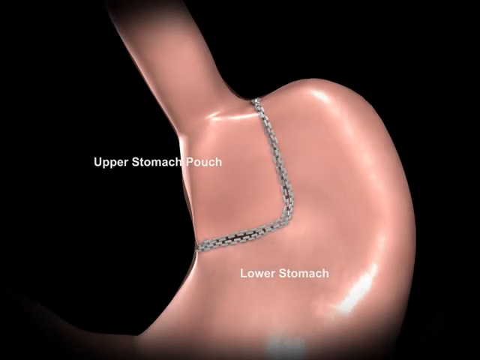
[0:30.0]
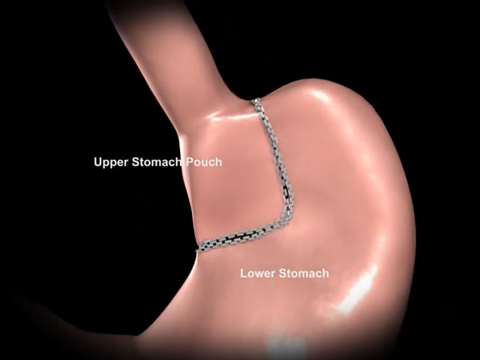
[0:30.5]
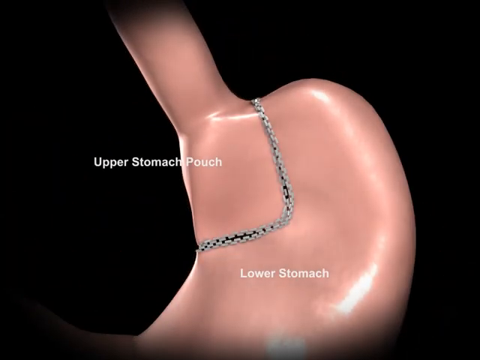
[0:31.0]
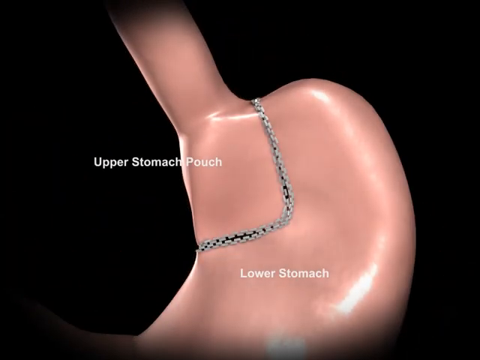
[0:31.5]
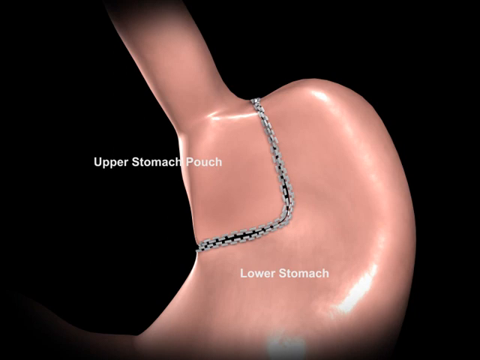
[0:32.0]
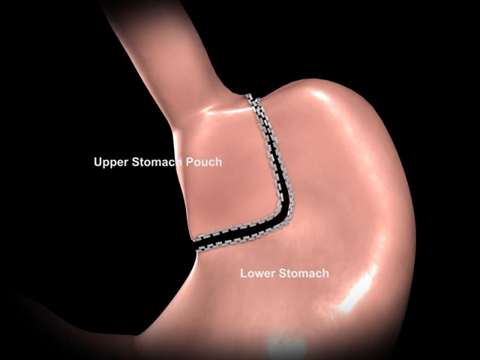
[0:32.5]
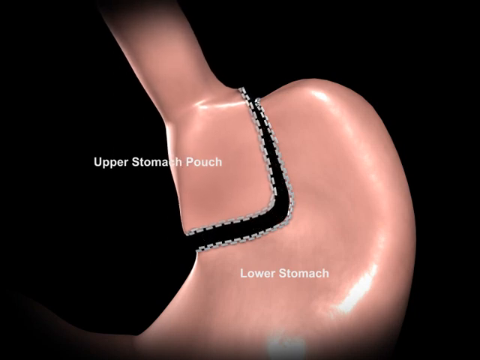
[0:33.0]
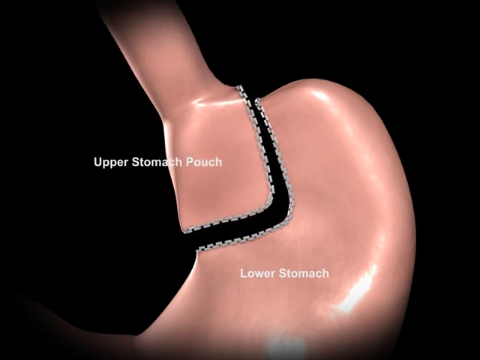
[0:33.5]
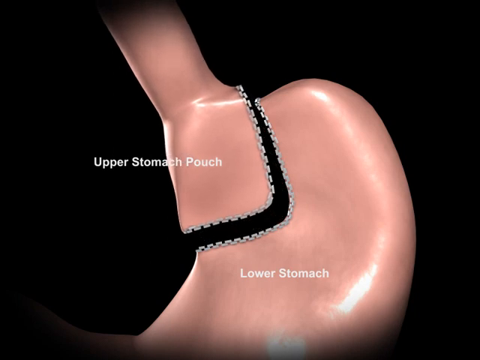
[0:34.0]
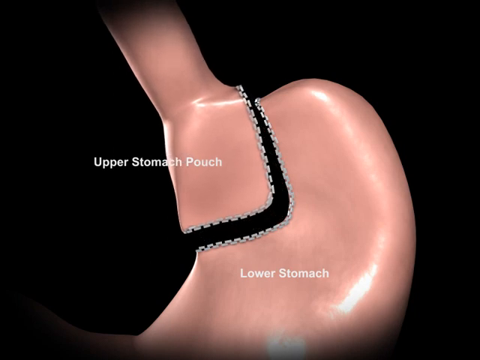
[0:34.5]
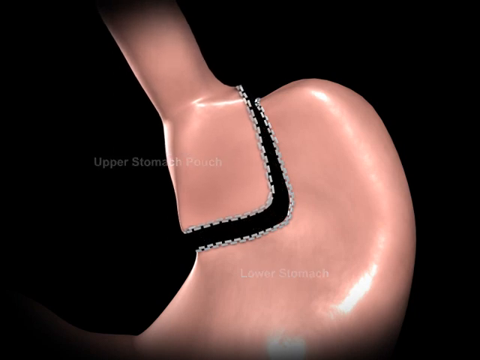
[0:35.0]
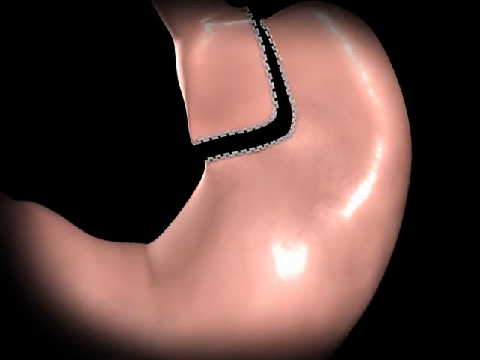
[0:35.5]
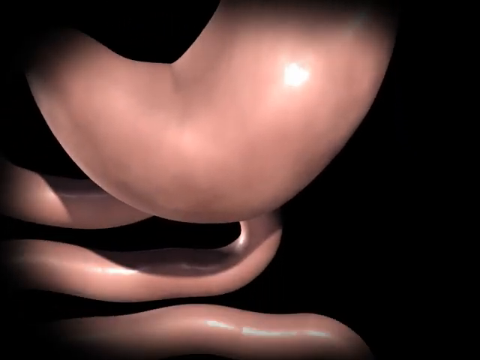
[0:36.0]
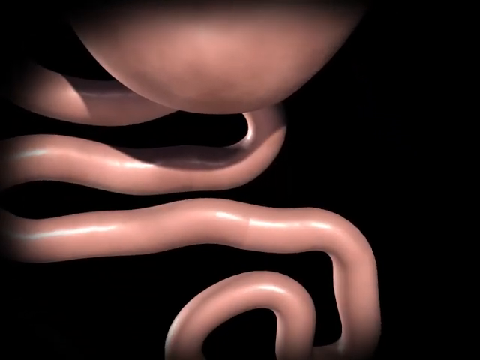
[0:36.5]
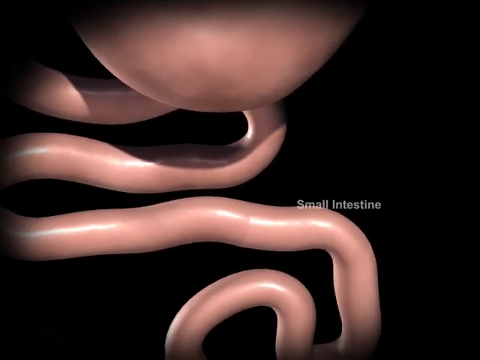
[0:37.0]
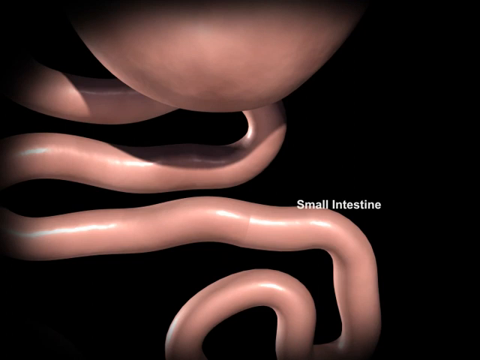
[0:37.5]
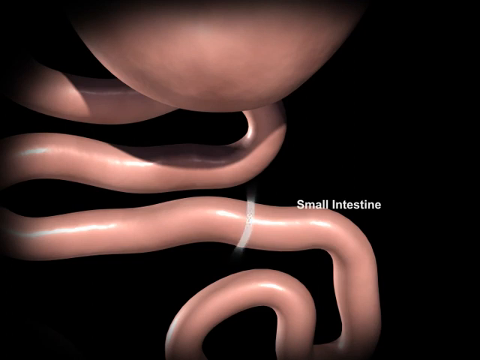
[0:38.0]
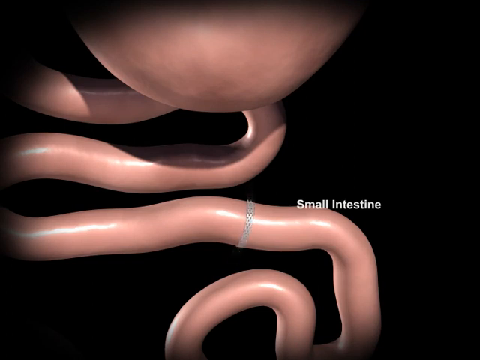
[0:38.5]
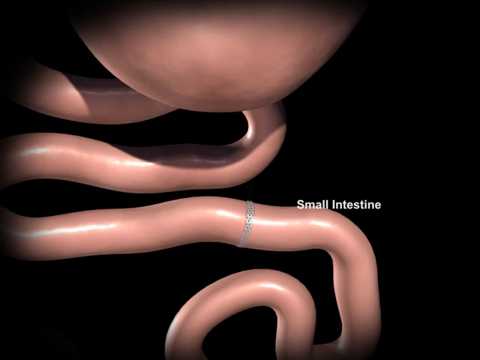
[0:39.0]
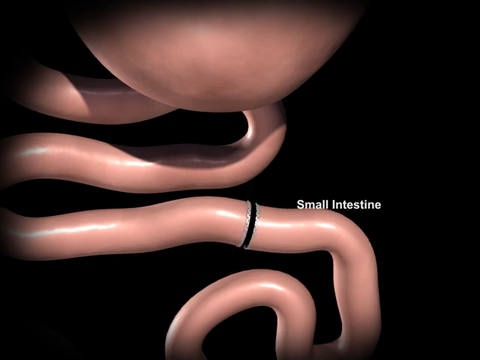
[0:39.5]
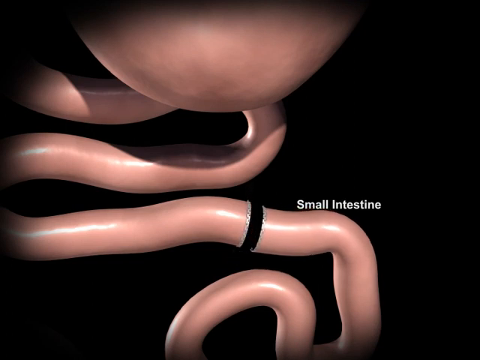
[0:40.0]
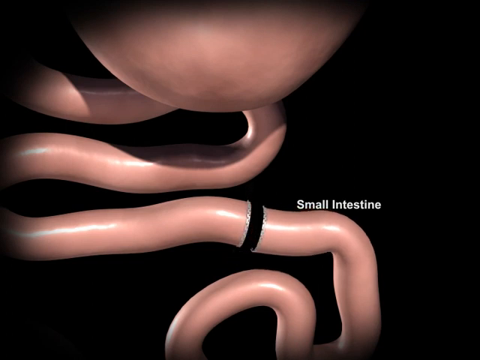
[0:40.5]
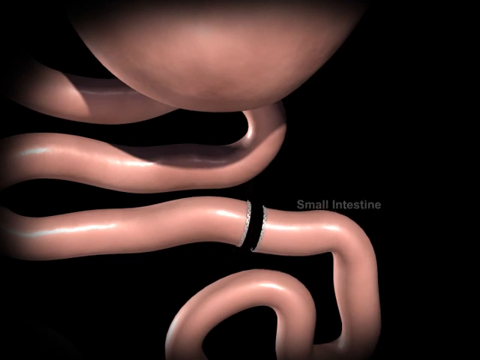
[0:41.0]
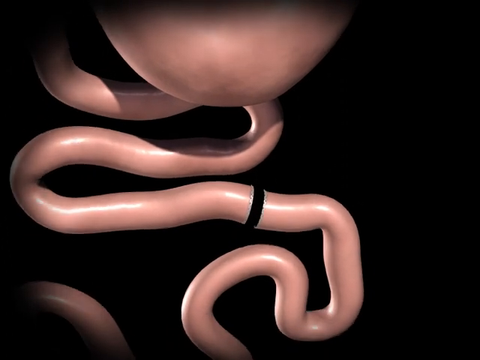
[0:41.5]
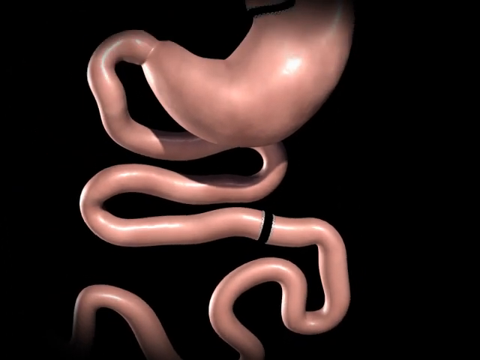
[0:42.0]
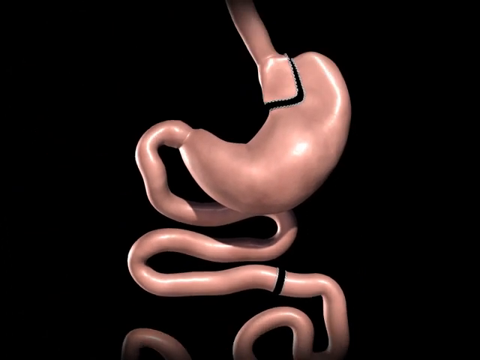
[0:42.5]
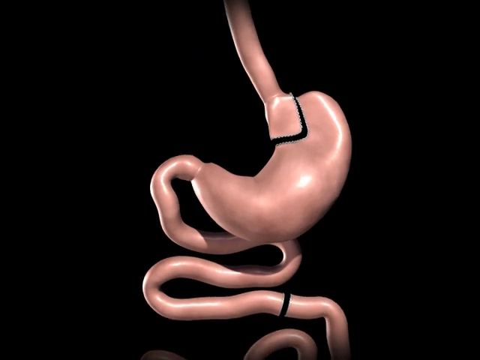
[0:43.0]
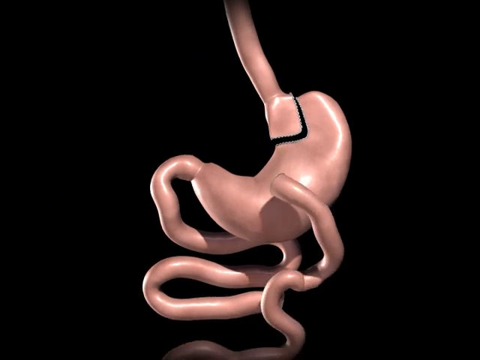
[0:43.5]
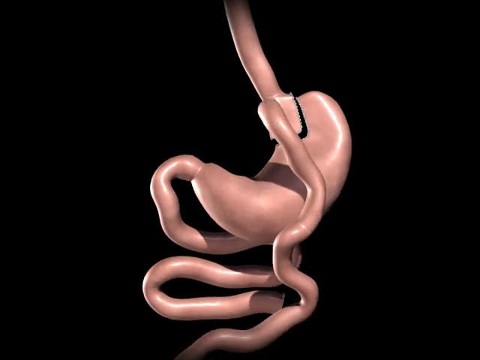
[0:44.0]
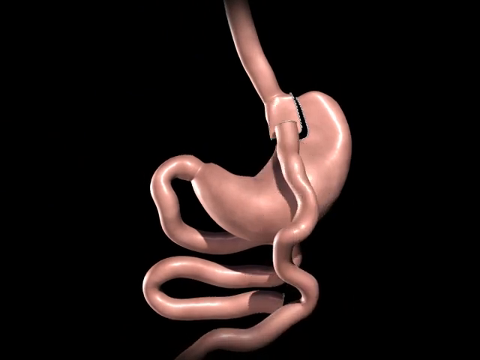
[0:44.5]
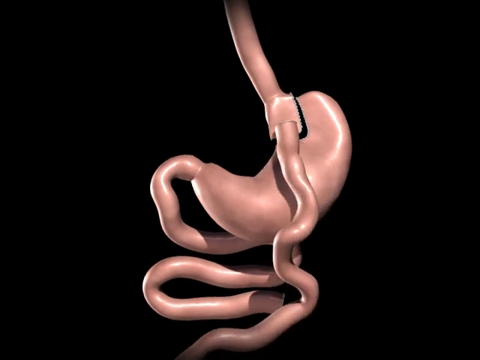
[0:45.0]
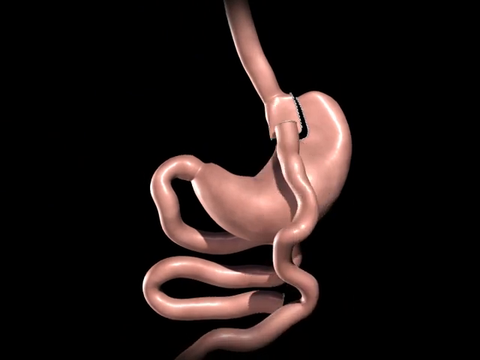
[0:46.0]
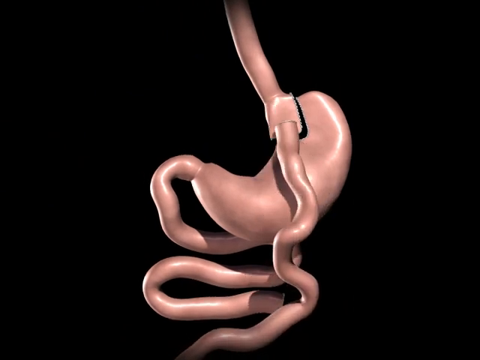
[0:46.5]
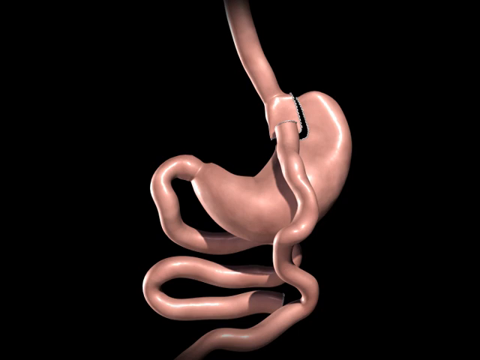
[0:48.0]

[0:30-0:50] The pink stomach and lower esophagus are shown in front of a black background. In the upper corner, almost splitting the stomach into quarters, is a silver zipper-like object. It starts just below the esophagus at the top center of the stomach, goes down to the center of the stomach, and then veers to the left in a square shape. This part is labeled "upper stomach pouch", and the area below it is labeled "lower stomach". The section below the esophagus that is separated by the zipper object is lifted up and toward the left. The image then moves to the lower stomach, where intestines swirl down, and the words "small intestines" appear. A silver zipper object is placed around one of the small intestines in a circular pattern, and the small intestines are then separated, with one portion moving away from the other toward the right. The image zooms up toward the separated area of the esophagus and stomach, and it is placed below the esophagus at the bottom of the separated stomach area.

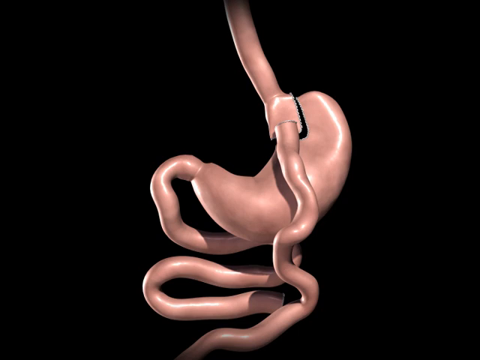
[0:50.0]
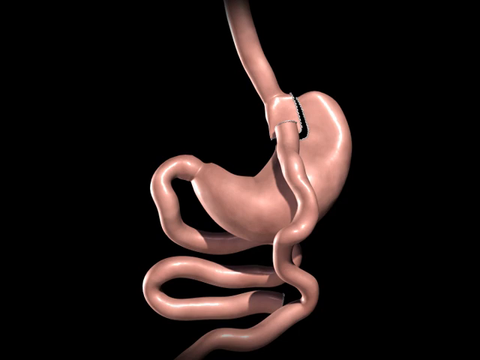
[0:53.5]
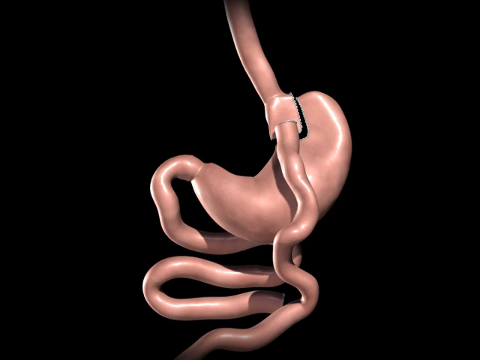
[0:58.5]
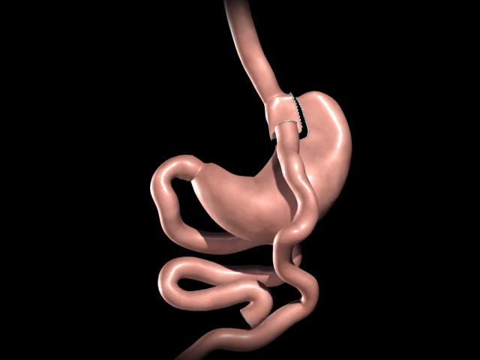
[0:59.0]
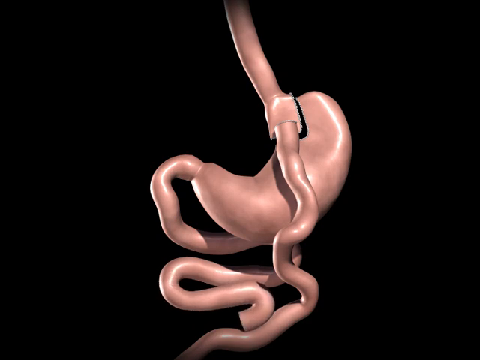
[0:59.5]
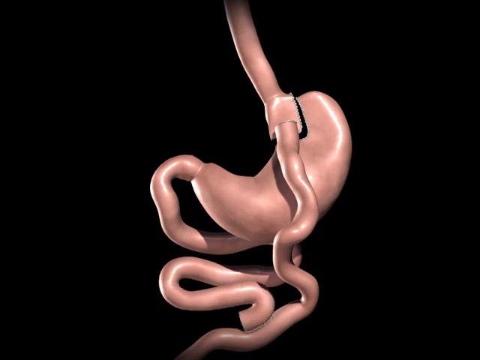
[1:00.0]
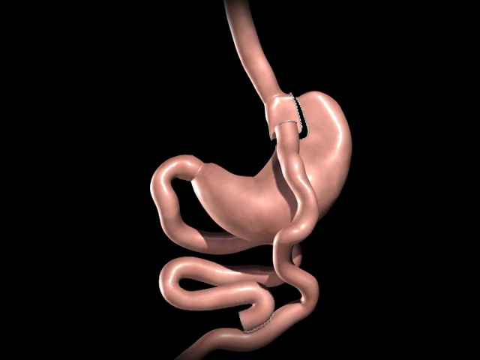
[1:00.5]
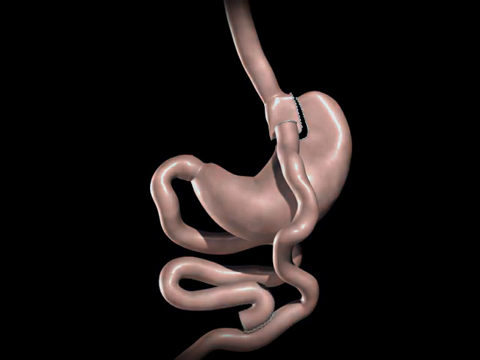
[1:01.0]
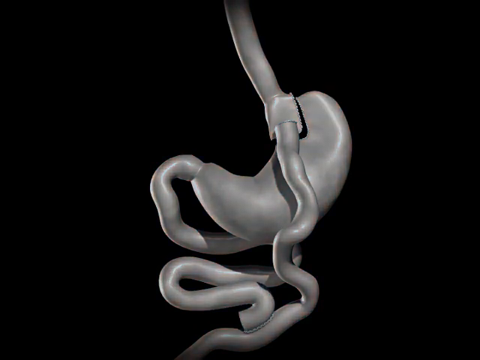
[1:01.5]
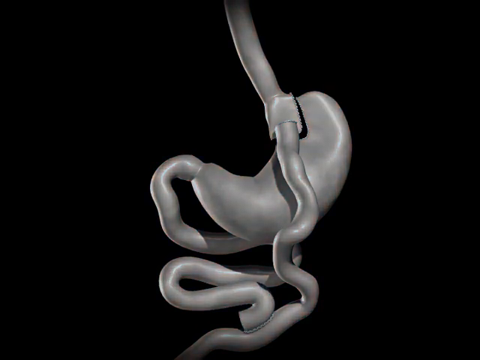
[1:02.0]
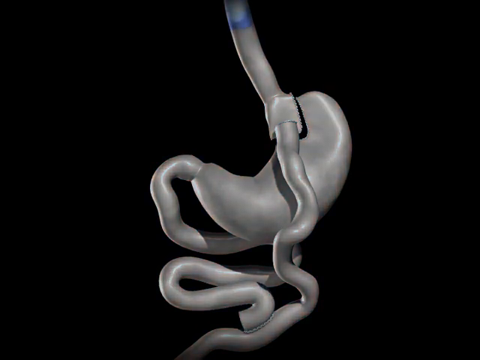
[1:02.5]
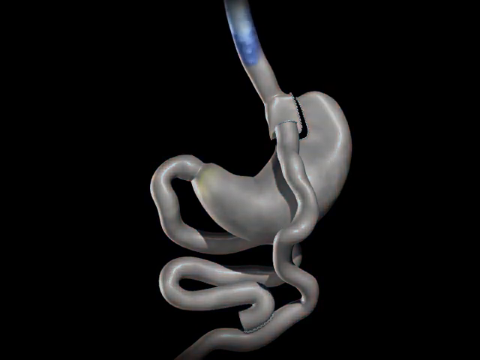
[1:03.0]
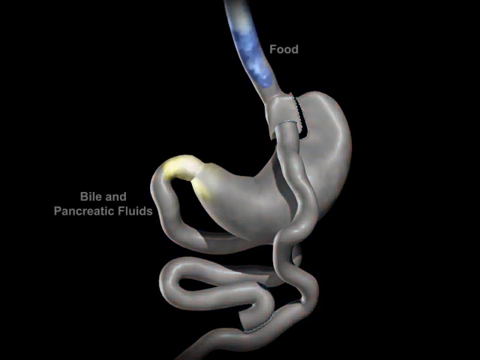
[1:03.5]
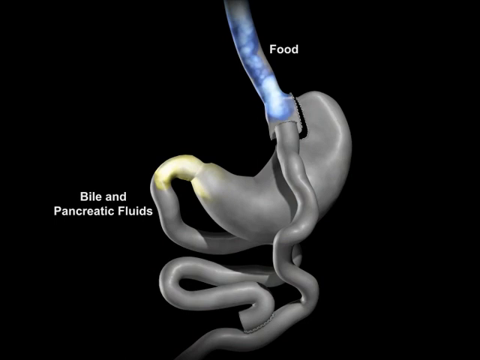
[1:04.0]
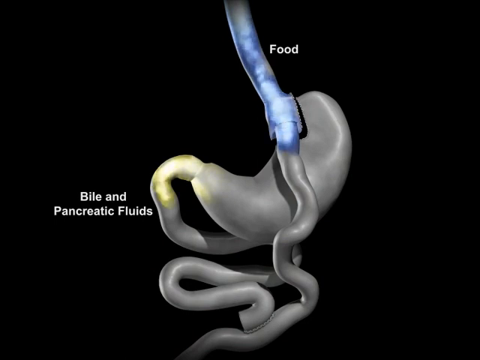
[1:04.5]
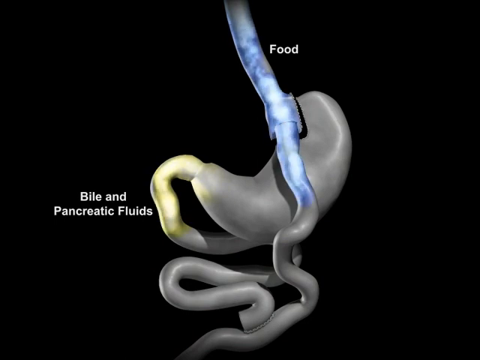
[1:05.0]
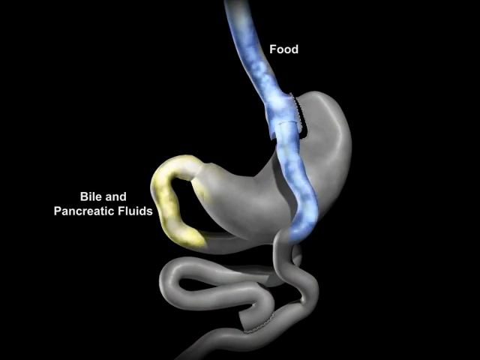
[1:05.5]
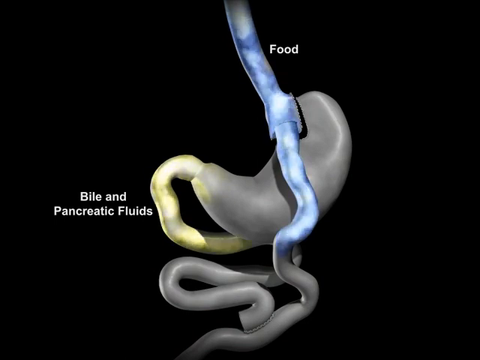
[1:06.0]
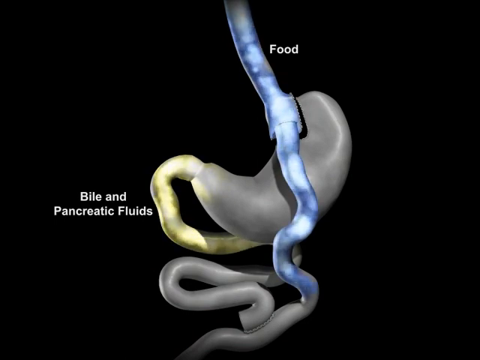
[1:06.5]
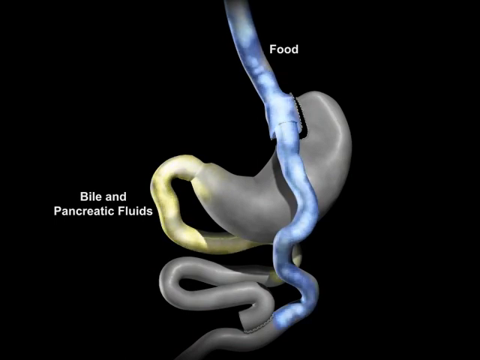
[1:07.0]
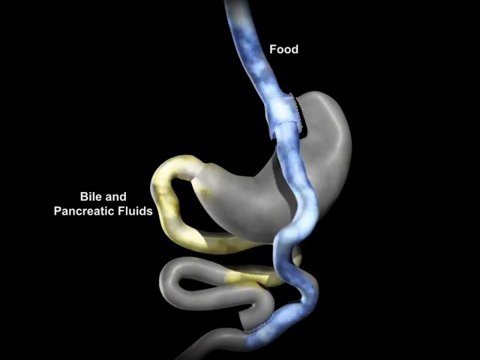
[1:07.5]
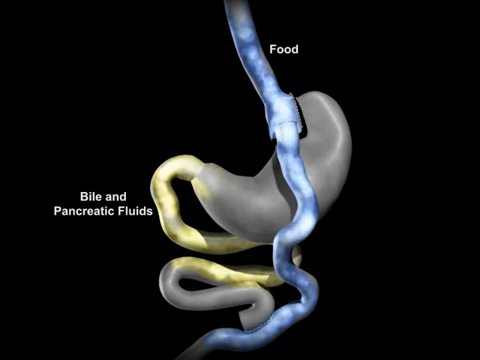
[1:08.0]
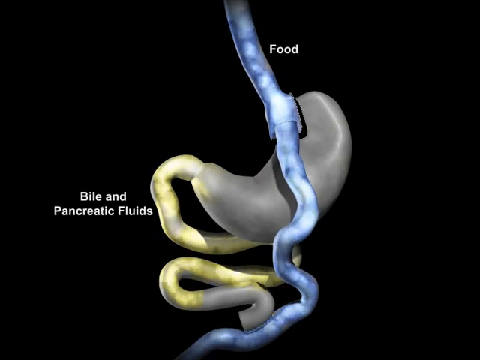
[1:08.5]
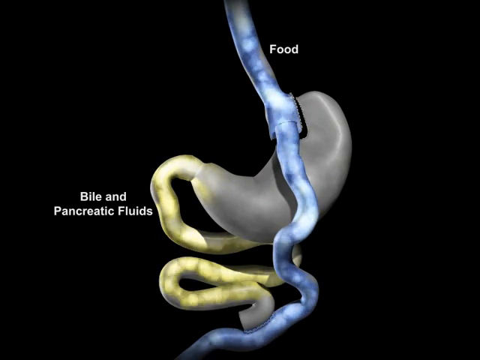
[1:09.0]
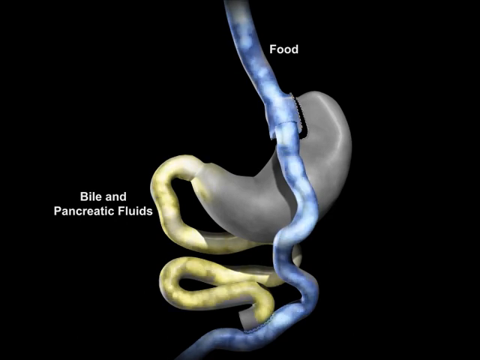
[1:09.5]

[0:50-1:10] A portion of the stomach below the esophagus, together with the esophagus, is separated from the rest of the stomach, with a portion of small intestines below the separated area. The organs are pink in front of a black background. The bottom of the stomach points up to the left, and intestines swirl down from it; toward the bottom, a portion of the intestines curves to the left in a shape almost like a hook. The organs turn gray while the background stays black. A blue fluid with white bubbles inside comes down the esophagus toward the stomach at the top center, labeled "food". At the bottom of the stomach and a portion of the intestines connected to it that loops out are the words "bowel and pancreatic fluids" in white. The blue substance flows down past the separated portion of the stomach, into the tube placed at the bottom of that separated portion, and down into the intestines. The yellow bowel and pancreatic fluids flow from the bottom of the stomach down the tube of the small intestines on the left, and both continue to flow down and loop through the tubes of the intestines.